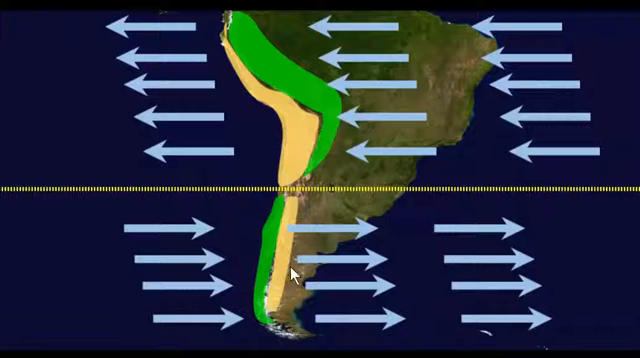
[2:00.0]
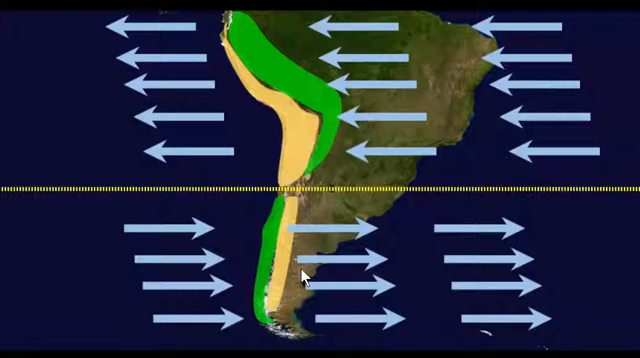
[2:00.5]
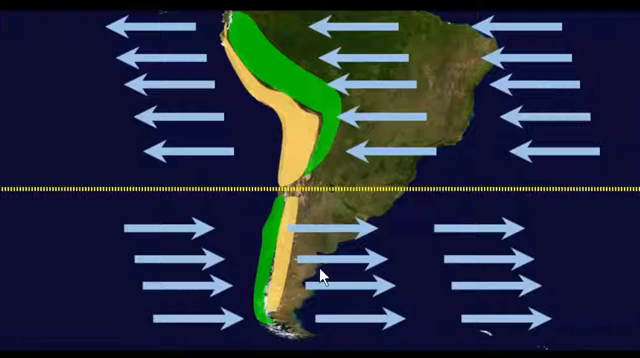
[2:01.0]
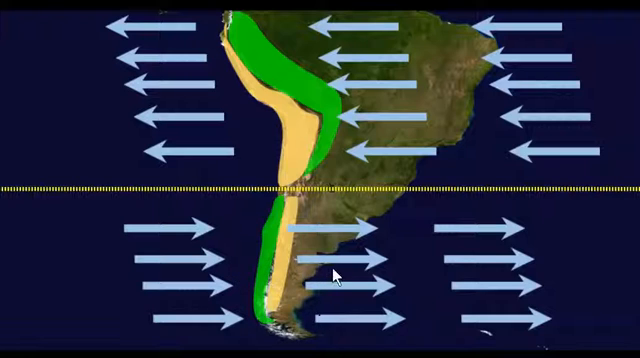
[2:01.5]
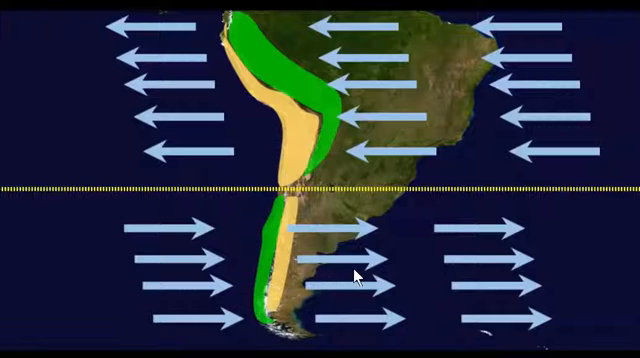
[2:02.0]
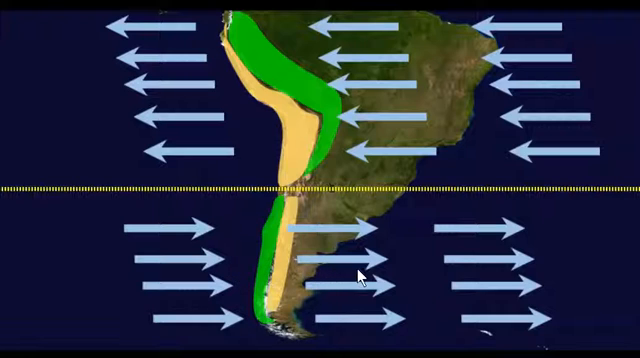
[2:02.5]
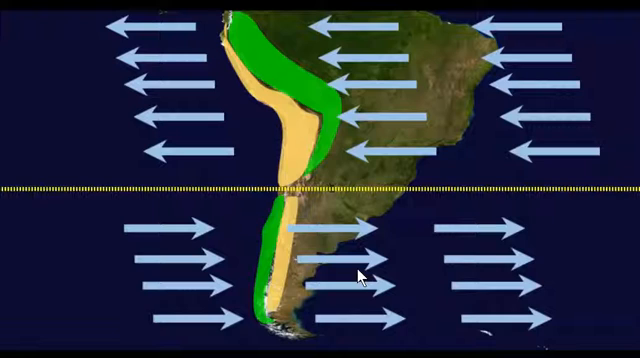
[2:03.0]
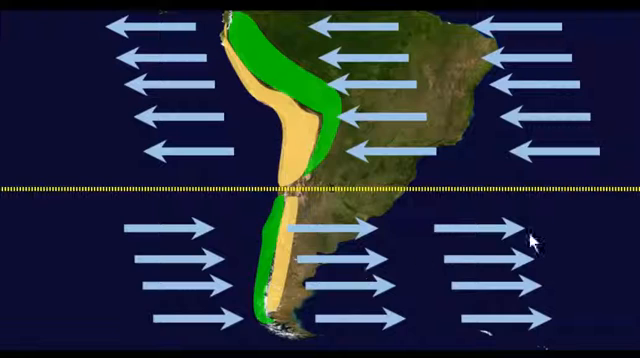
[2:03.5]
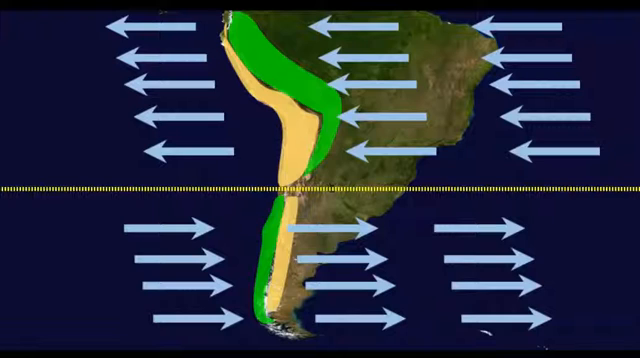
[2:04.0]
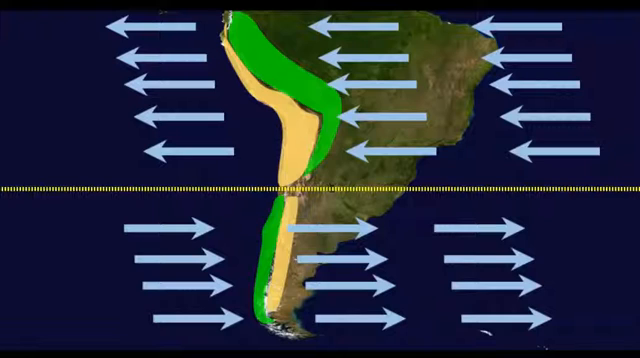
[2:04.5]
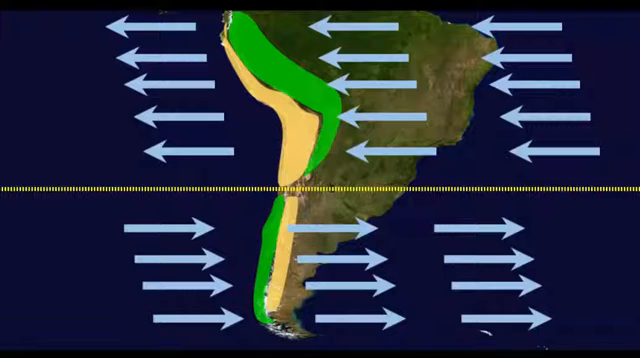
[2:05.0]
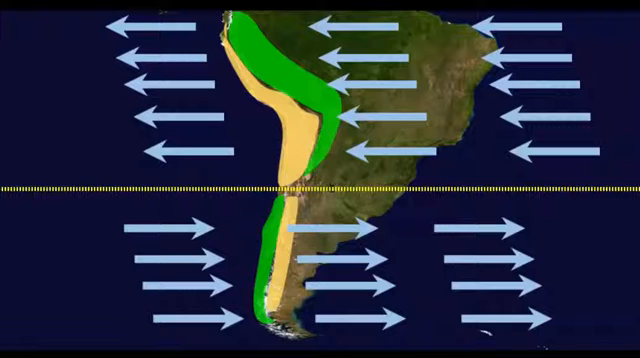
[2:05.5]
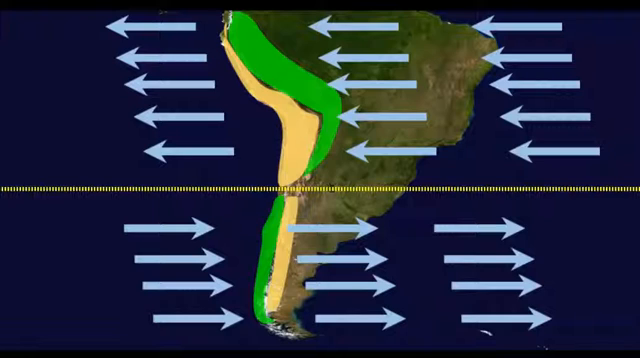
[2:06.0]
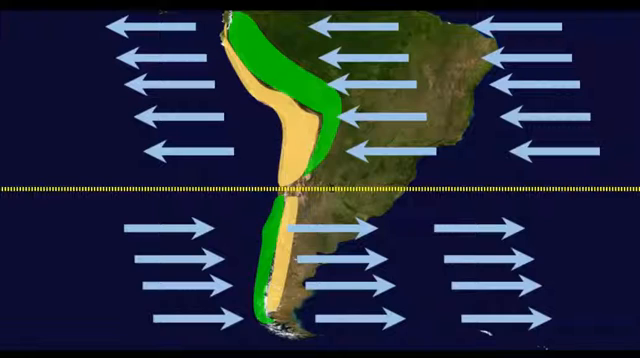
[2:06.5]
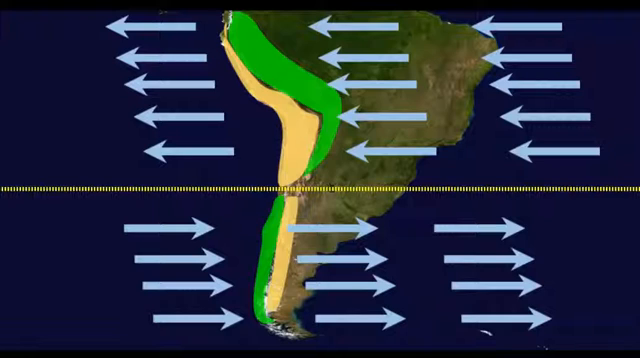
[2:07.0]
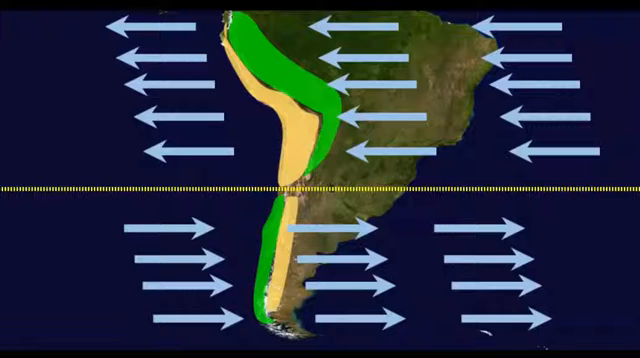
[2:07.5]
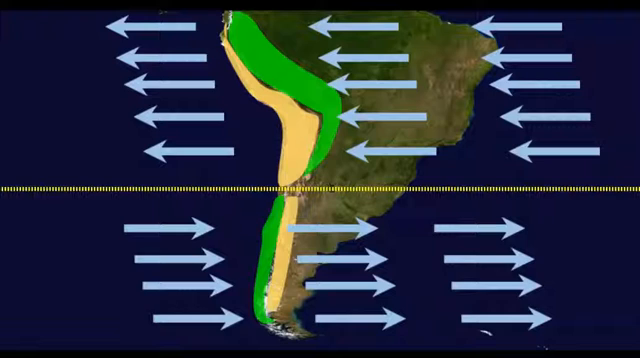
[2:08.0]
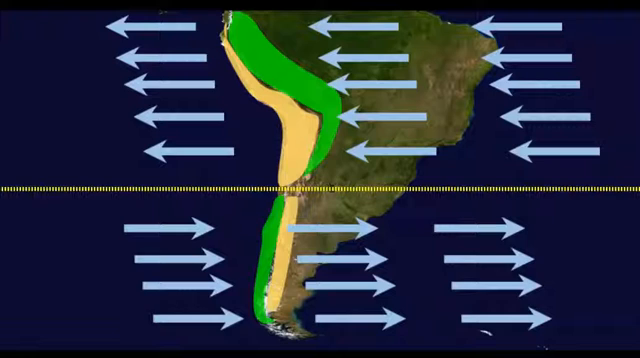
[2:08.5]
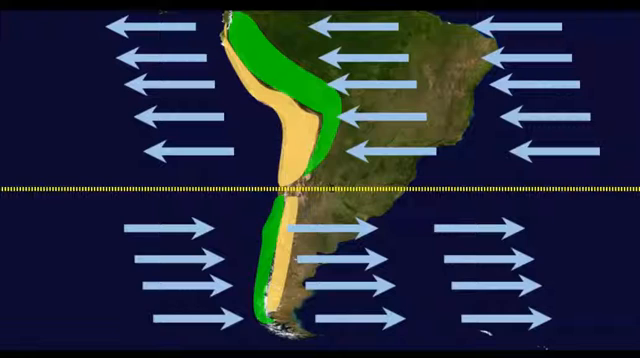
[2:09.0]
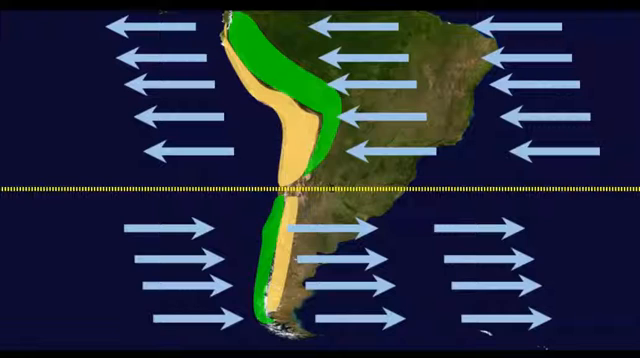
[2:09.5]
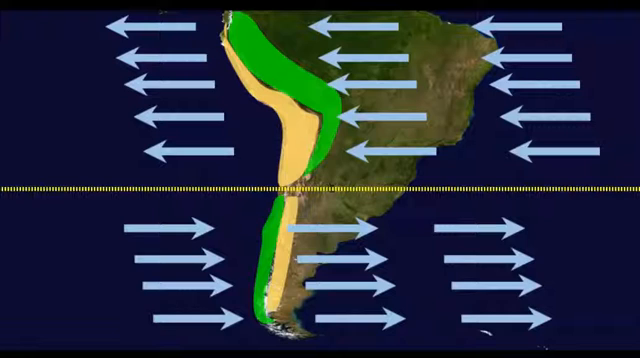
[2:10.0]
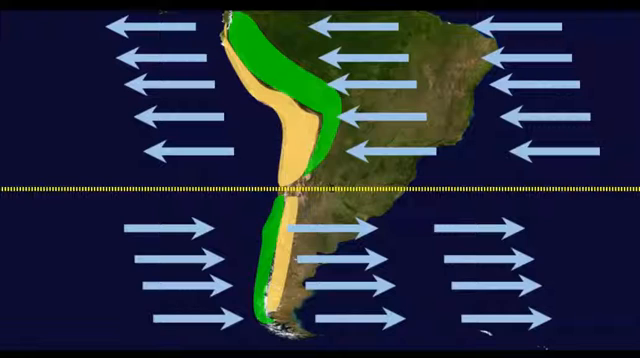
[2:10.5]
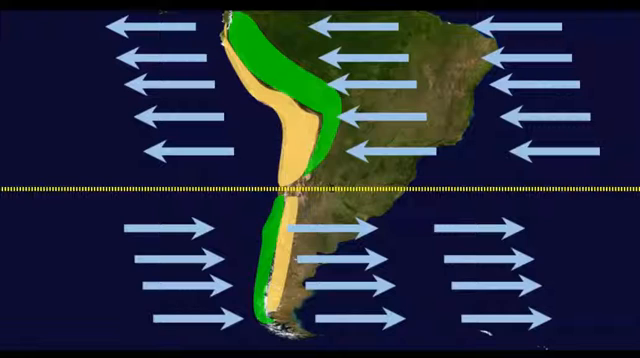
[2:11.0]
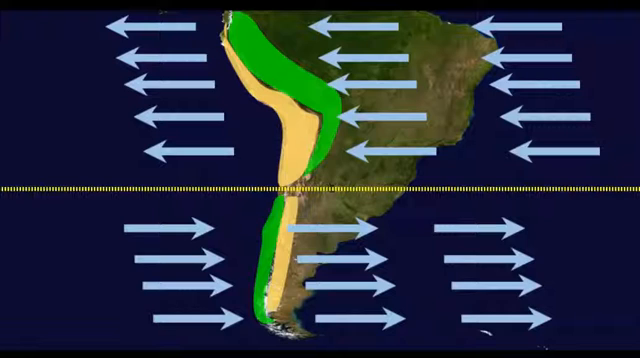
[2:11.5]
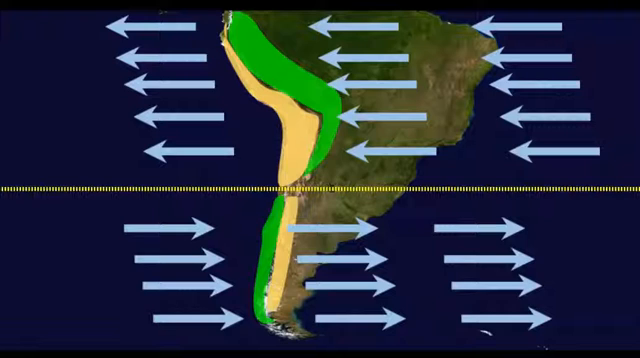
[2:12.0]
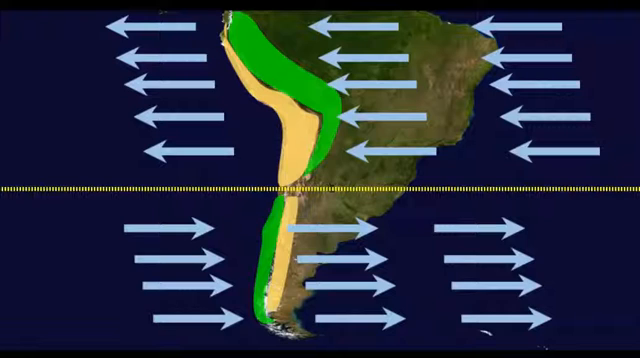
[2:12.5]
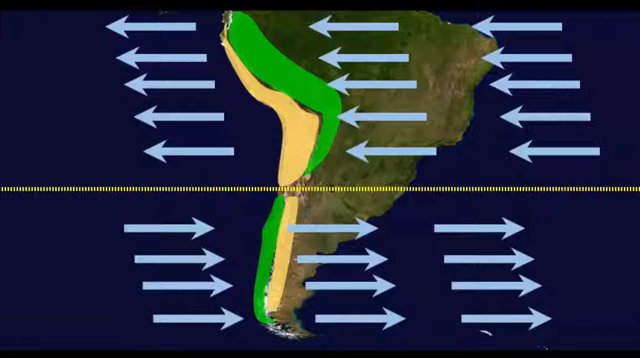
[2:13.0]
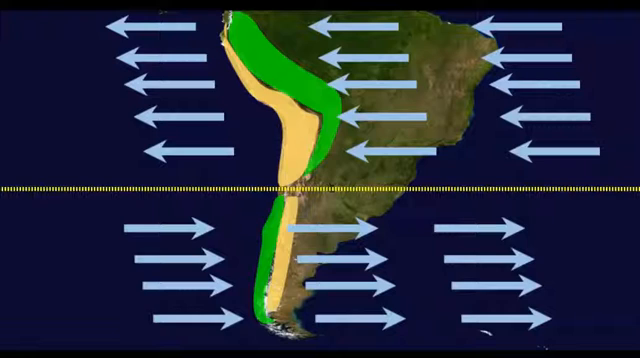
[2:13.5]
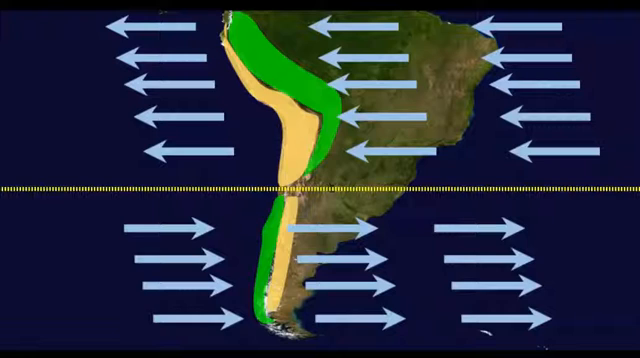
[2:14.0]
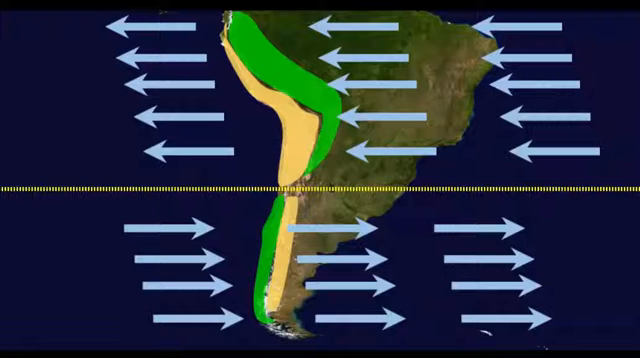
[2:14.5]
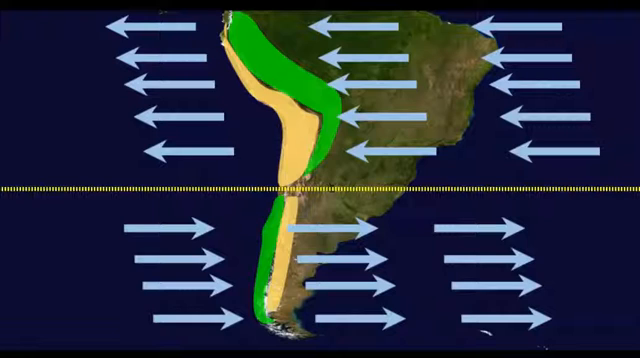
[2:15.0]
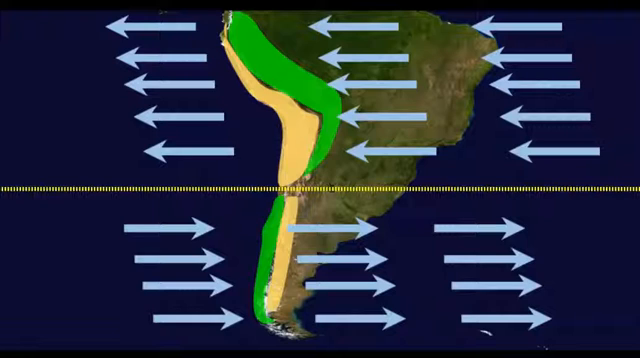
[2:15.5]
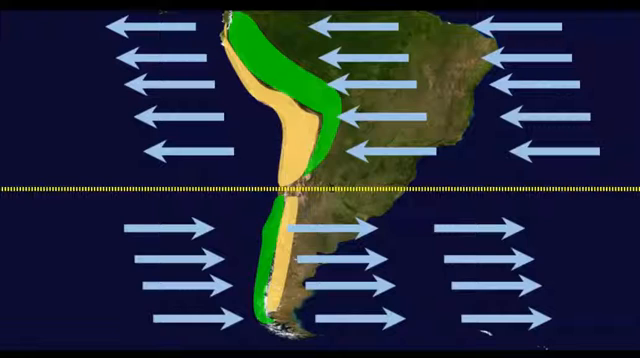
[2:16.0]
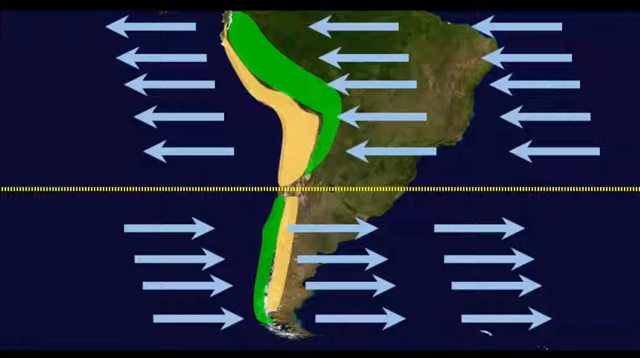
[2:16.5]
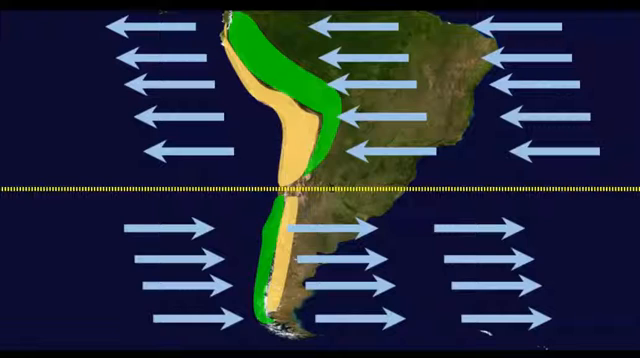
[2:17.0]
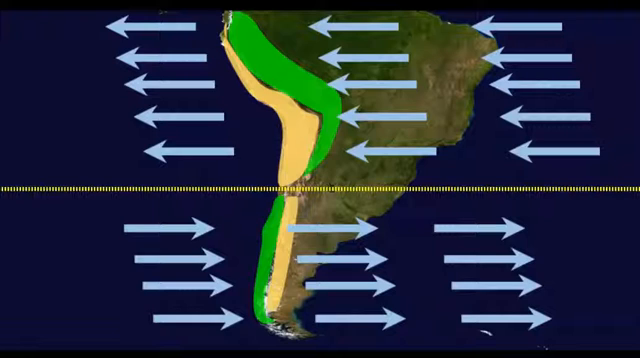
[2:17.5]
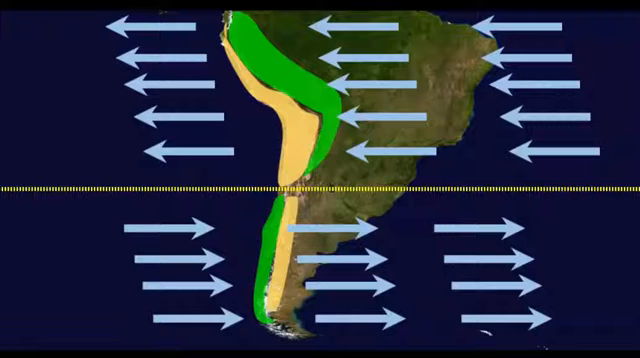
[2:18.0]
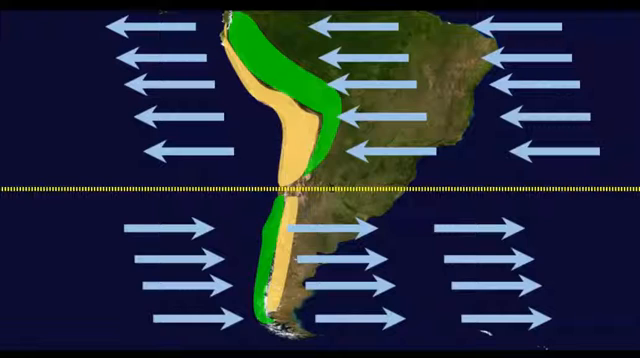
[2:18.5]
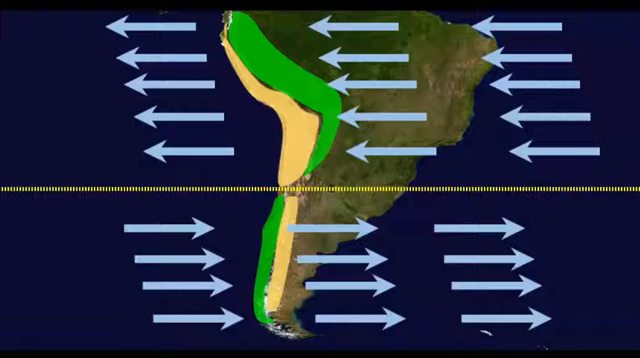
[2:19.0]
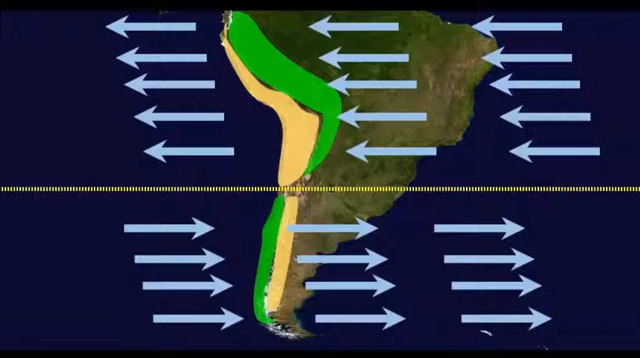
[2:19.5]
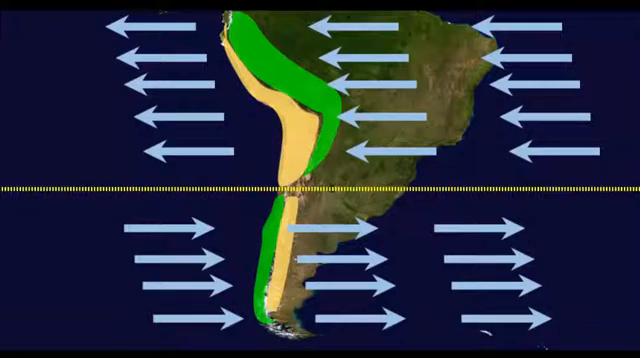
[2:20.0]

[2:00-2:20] The graphical map illustration is displayed against a dark background, with a dotted yellow line running right across the middle of the screen from the left side to the right side. Pale blue arrows are on the map: three batches of five arrows above the yellow line with their heads pointing left, and three batches of five arrows below the line with their heads pointing right. A mouse pointer appears briefly on the screen and disappears through the right side. The arrows continue flowing over the landmass, and the screen is static with the mouse pointer no longer visible.